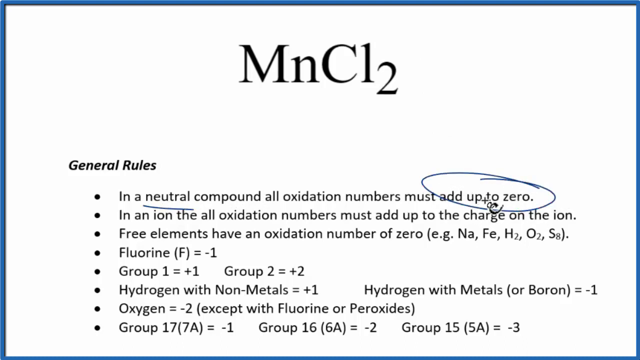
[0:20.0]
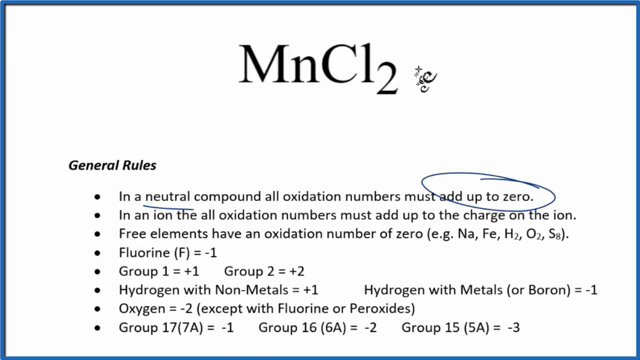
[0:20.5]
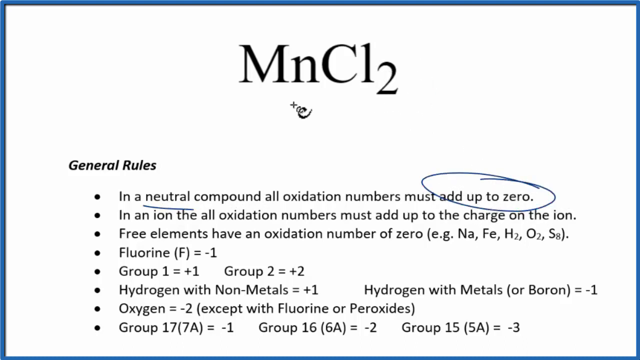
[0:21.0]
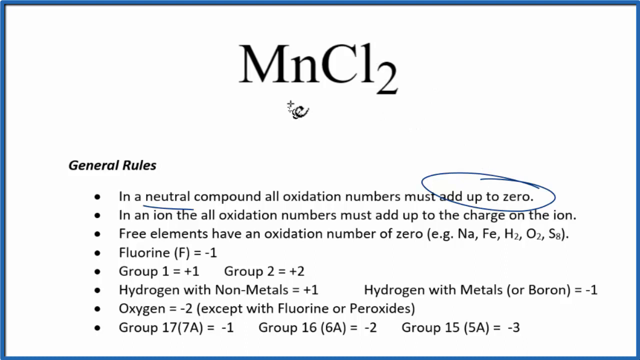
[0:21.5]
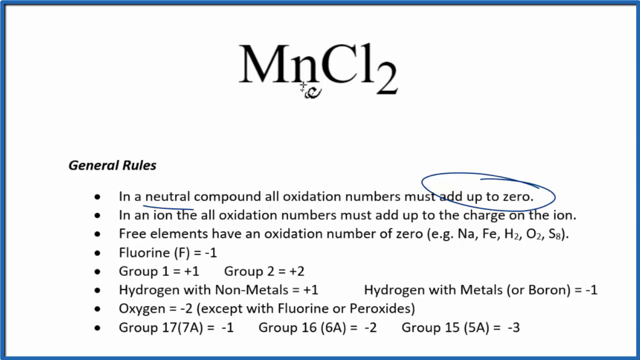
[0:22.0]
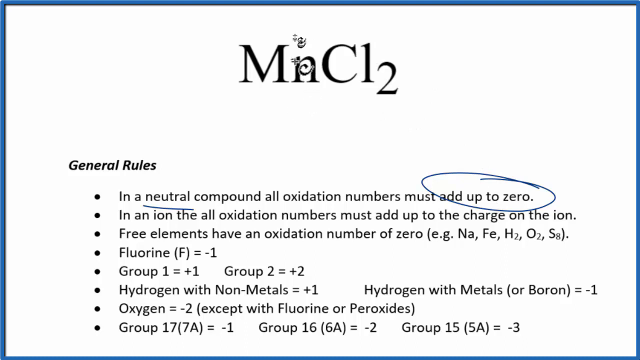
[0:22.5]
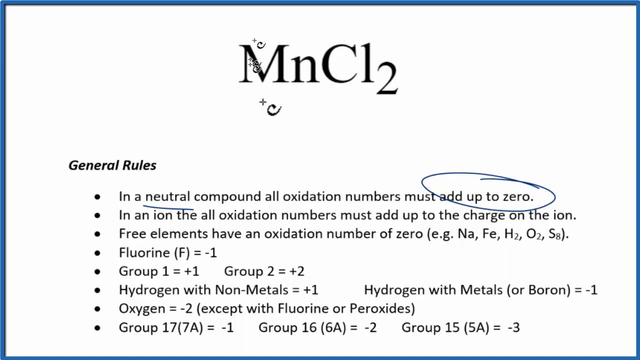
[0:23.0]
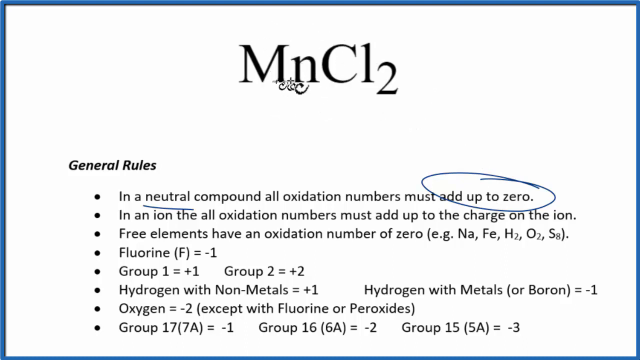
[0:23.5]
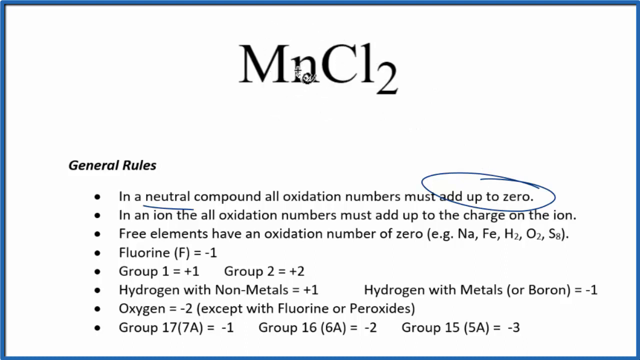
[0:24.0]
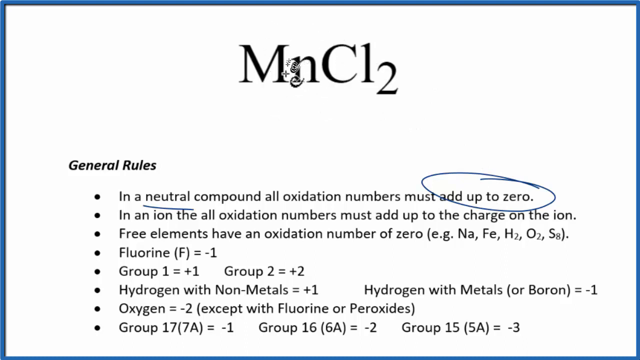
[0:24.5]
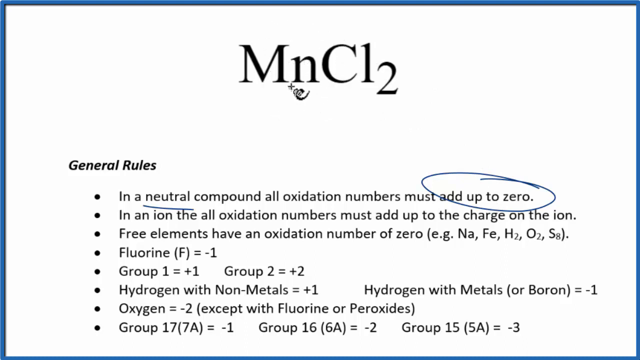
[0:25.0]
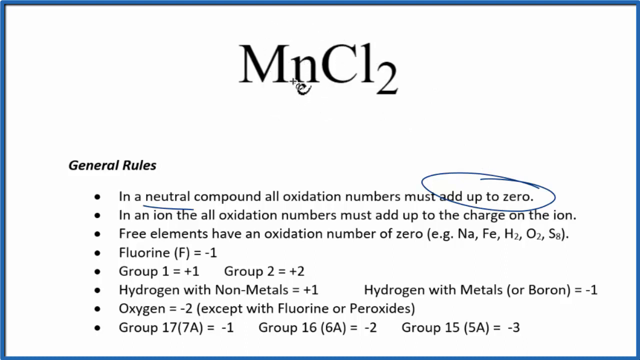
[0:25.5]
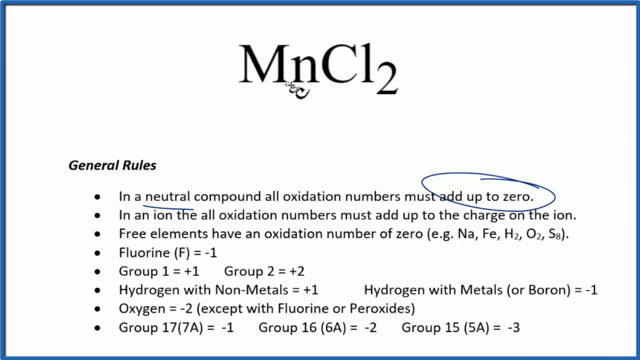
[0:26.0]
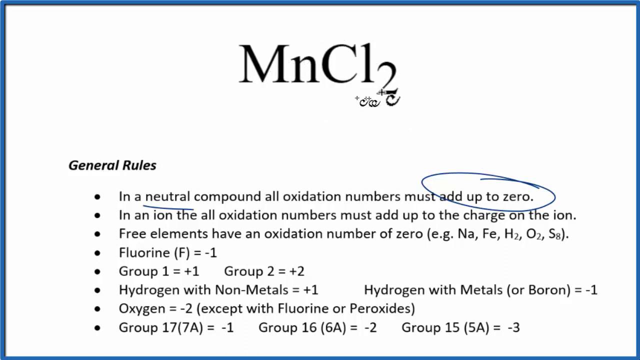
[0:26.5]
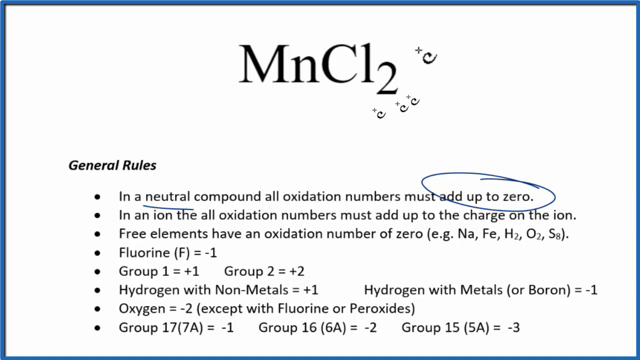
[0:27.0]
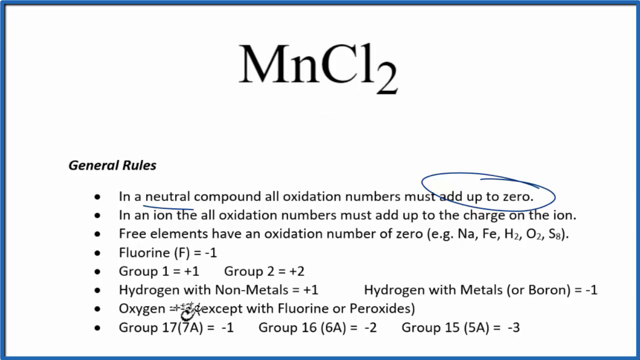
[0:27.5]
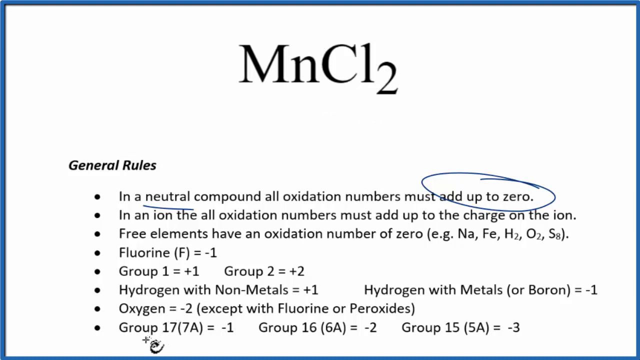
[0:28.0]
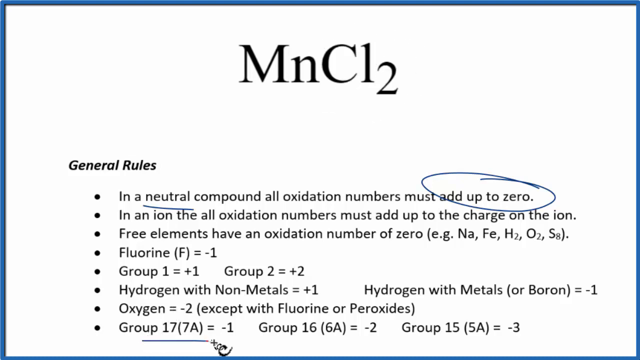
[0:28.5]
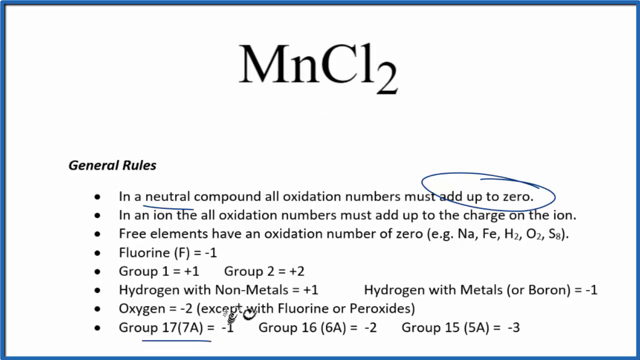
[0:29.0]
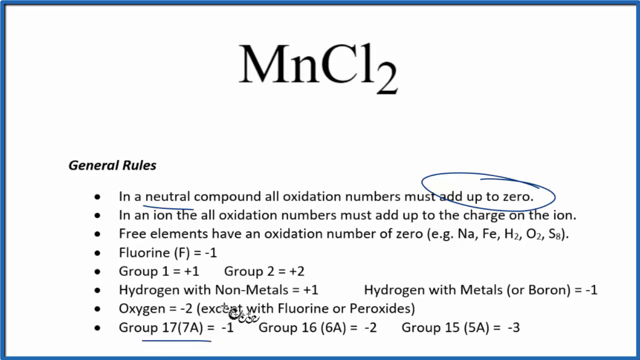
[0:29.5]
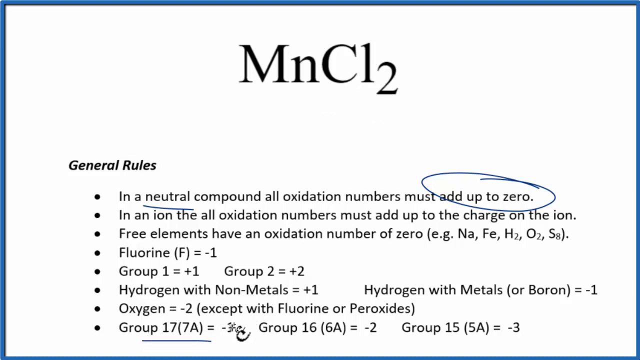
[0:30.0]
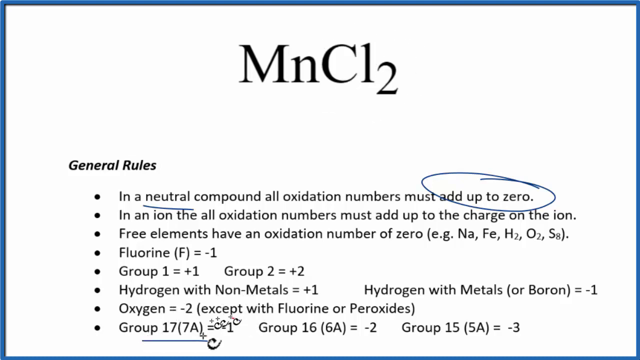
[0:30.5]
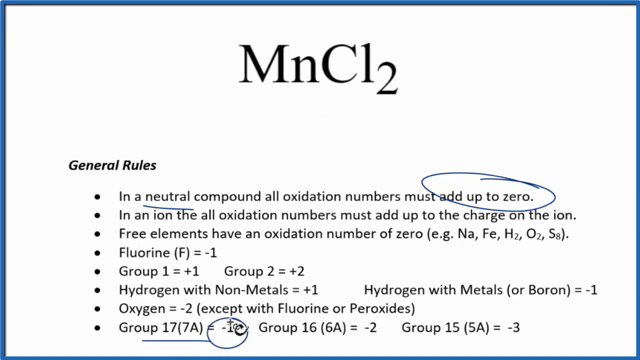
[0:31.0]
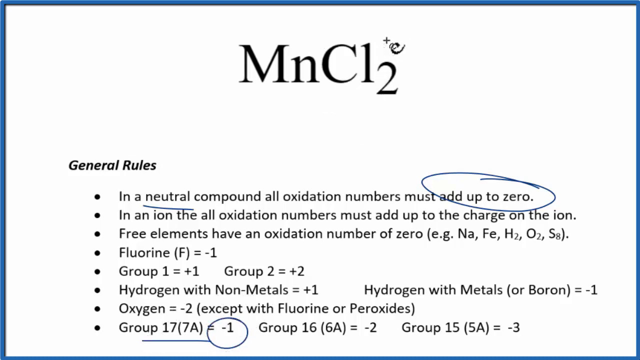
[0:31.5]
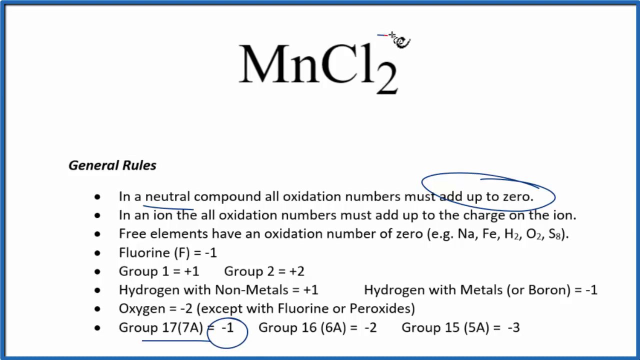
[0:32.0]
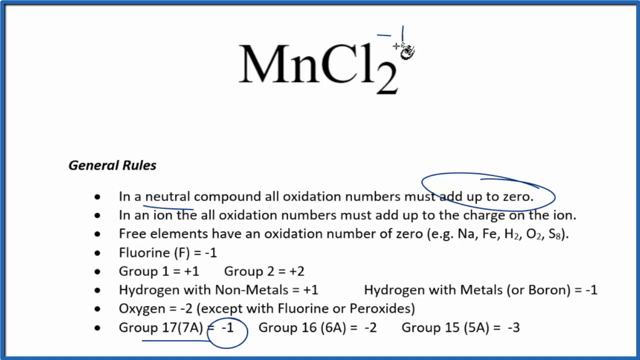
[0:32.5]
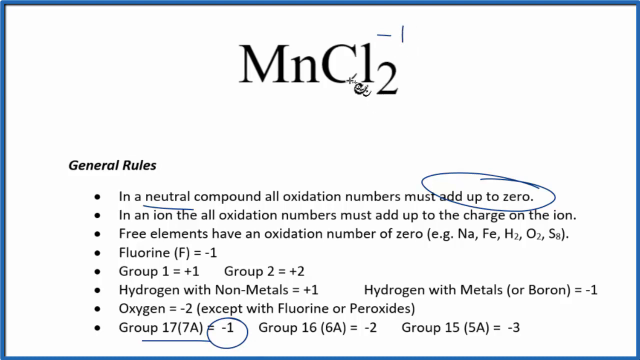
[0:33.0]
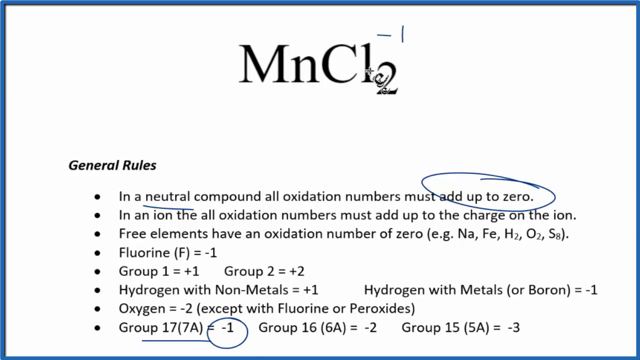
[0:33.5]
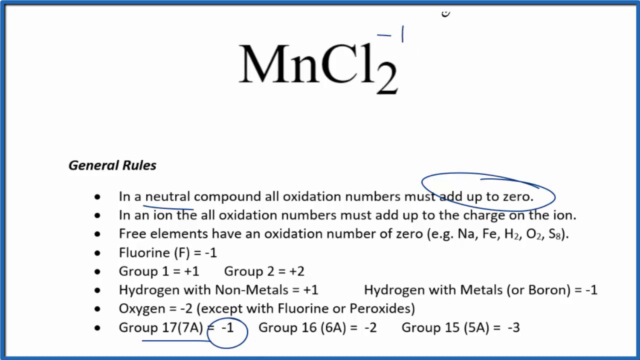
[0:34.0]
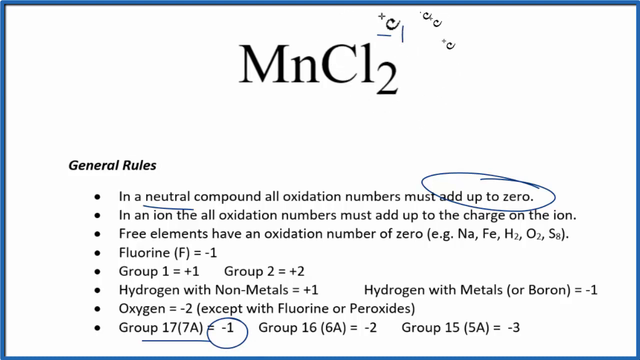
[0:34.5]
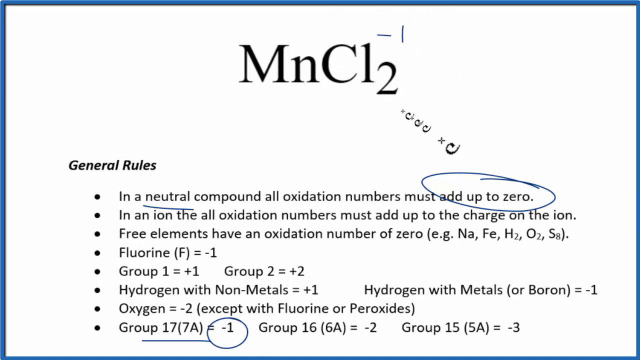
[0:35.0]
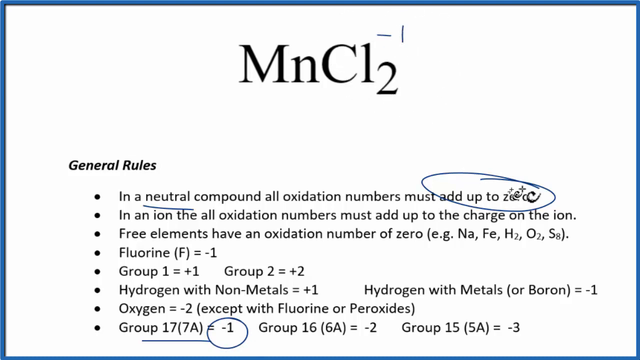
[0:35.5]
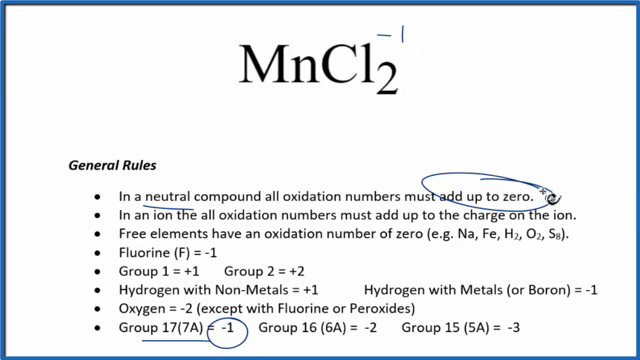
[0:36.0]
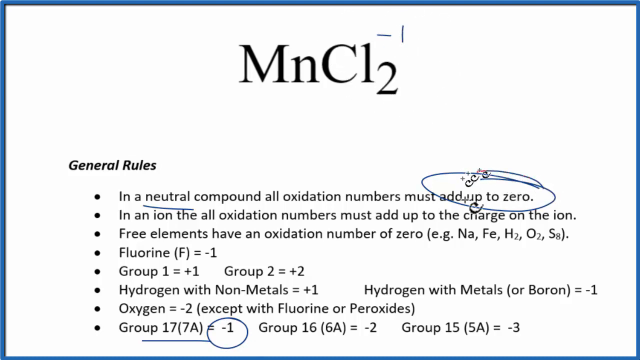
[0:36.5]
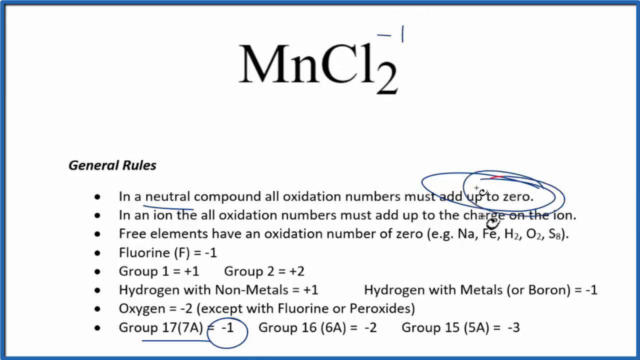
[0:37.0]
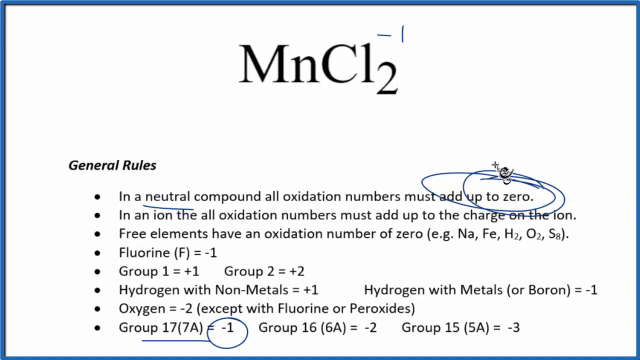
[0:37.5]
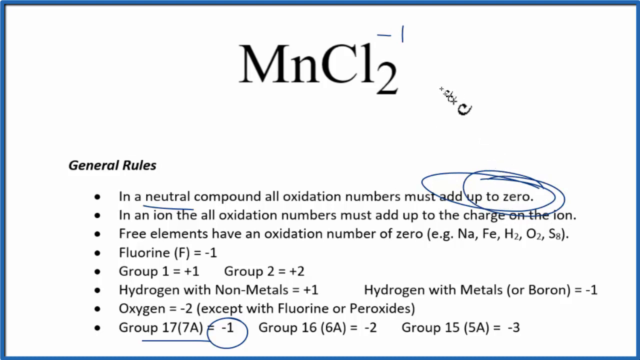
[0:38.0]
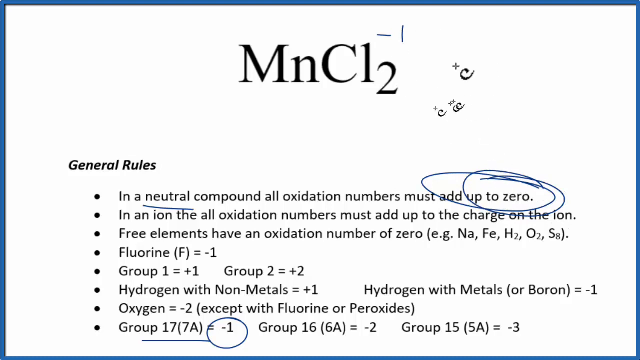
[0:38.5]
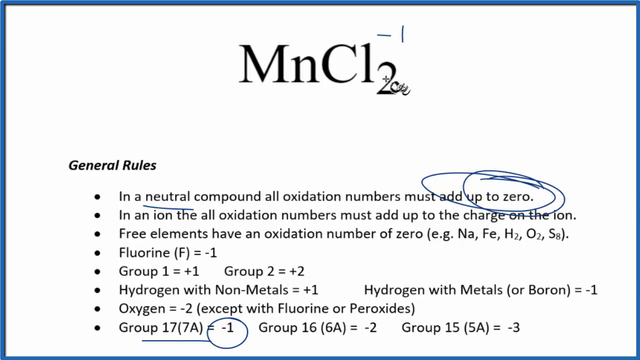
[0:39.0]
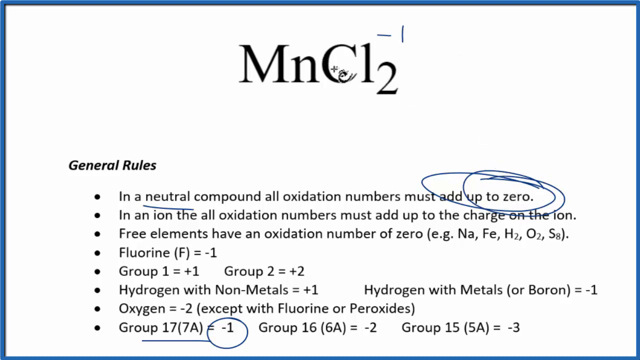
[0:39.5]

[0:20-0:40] A slide from a slideshow presentation has a white background and a dark blue outline around its edges. The title is "MnCl" with a subscript "2" next to the L. Below it is a subtitle reading "General Rules" in bold italicized font, followed by bullet points. The first bullet point reads "in a neutral compound, all oxidation numbers must add up to zero," with a handwritten blue line under "neutral" and a circle drawn around "zero". A plus-shaped mouse cursor with squiggly lines following it hovers over the word "up" in "up to zero". It slides up to the "Cl", hovers under the M in "Mn" for a moment, then circles the title twice. The cursor draws a small imaginary line between the M and the N in the title, circles the "Cl2", and disappears off screen. It emerges from the bottom of the screen, hovers around some of the lower bullet points, and circles a negative one in the second-to-last bullet point. Returning to the top of the screen, it writes negative one above and to the right of the L in "MnCl2". The cursor traces imaginary circles around the "Cl2", returns to the circle around "add up to zero", and draws a second circle around the words "up to zero". It then draws an imaginary circle to the right of the title.